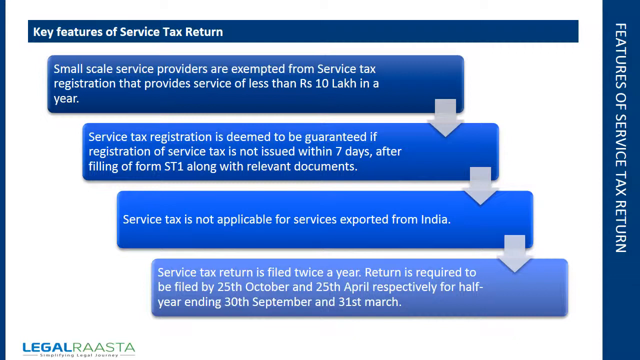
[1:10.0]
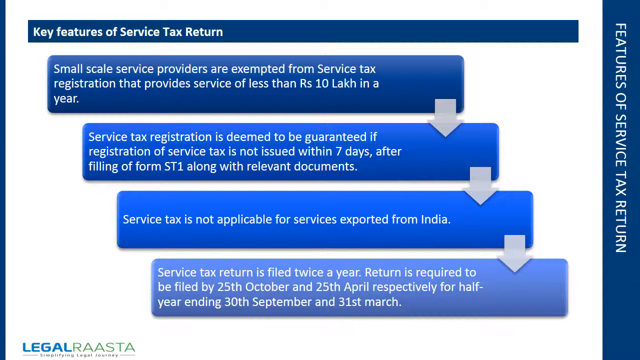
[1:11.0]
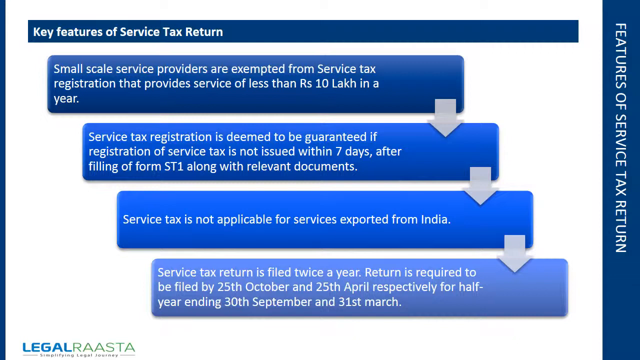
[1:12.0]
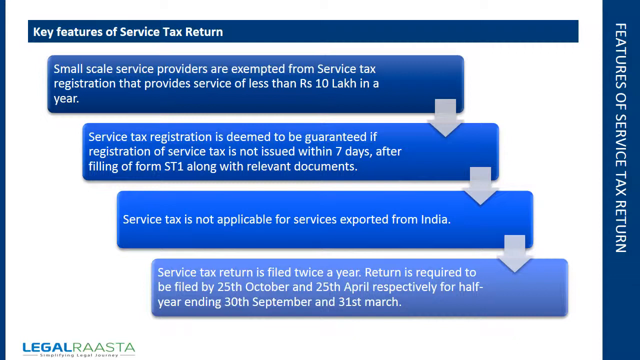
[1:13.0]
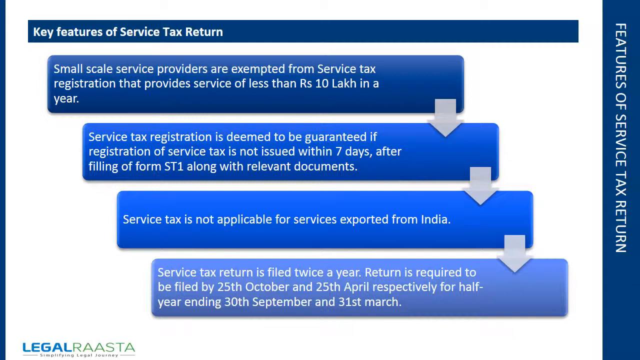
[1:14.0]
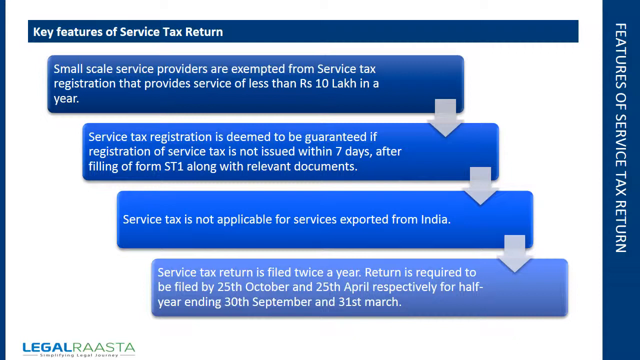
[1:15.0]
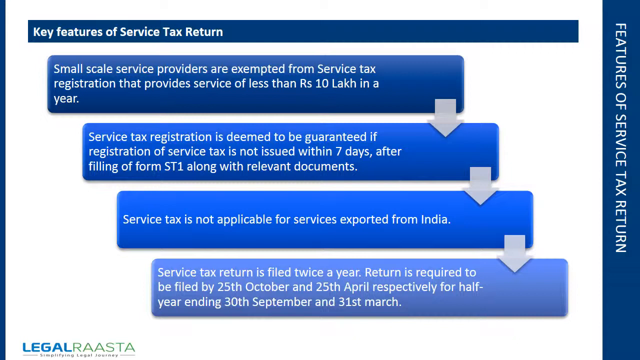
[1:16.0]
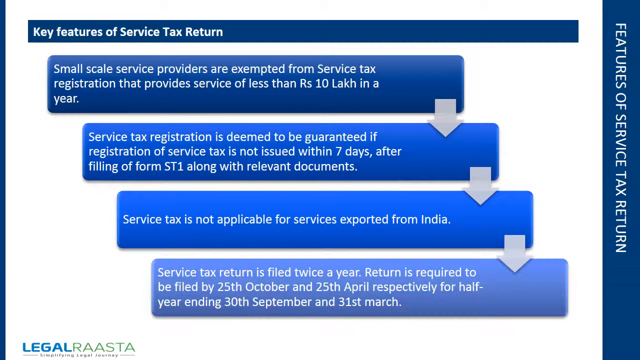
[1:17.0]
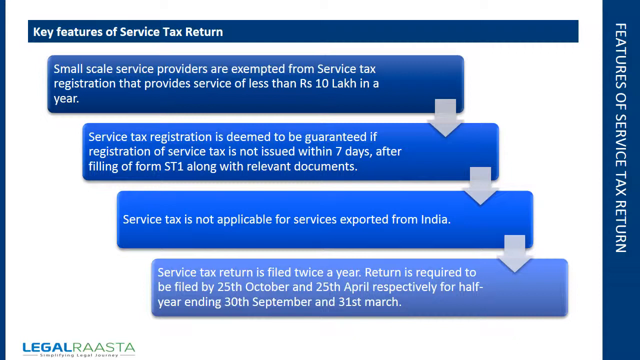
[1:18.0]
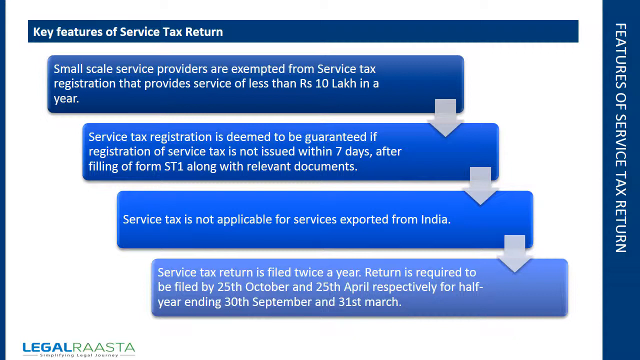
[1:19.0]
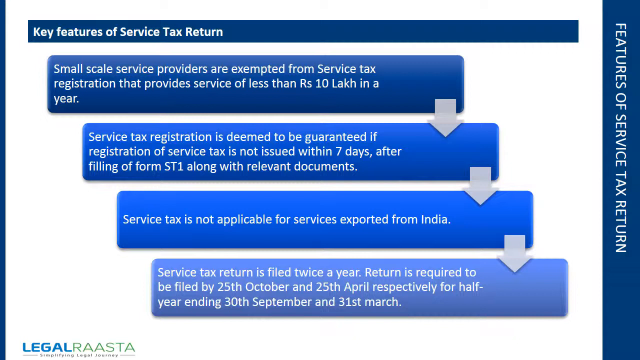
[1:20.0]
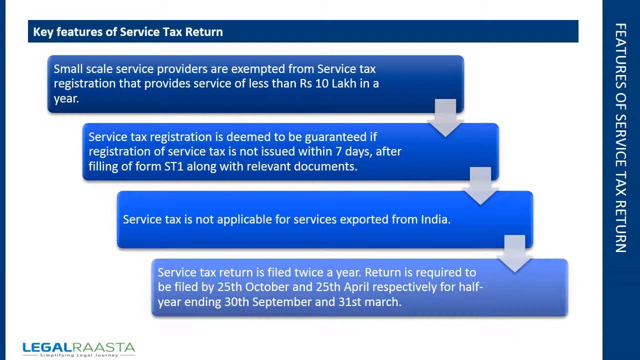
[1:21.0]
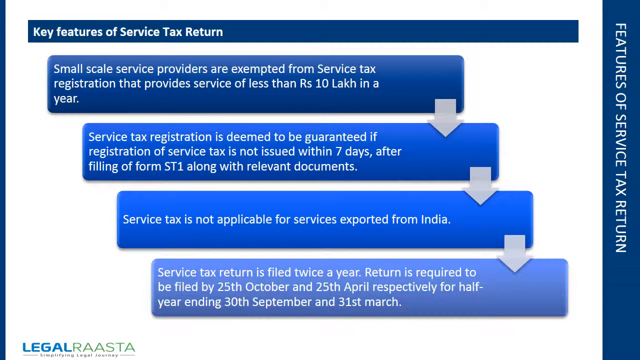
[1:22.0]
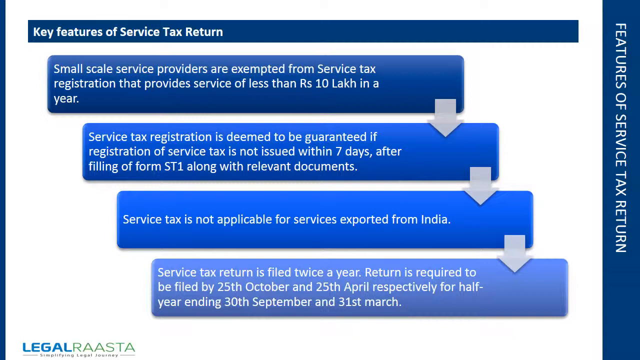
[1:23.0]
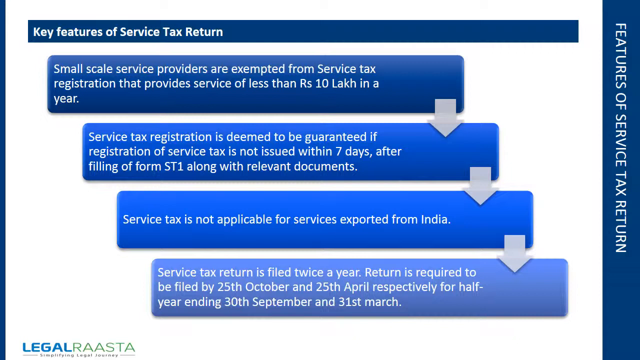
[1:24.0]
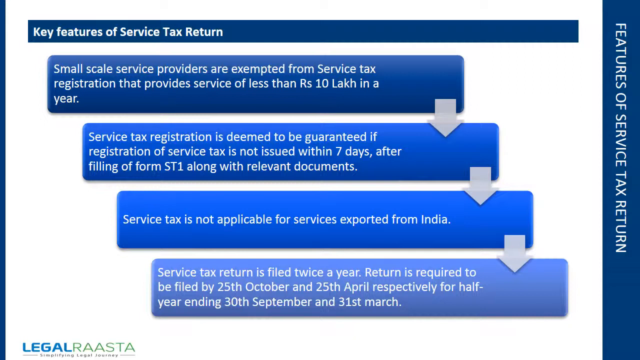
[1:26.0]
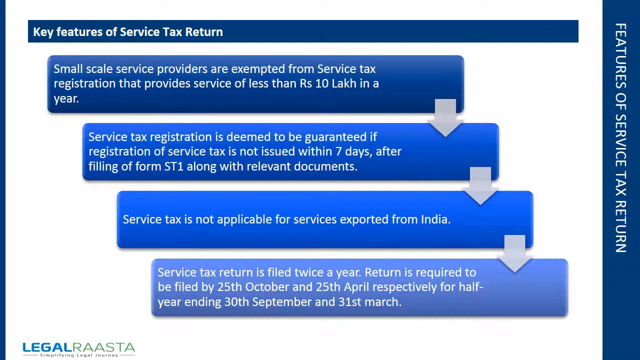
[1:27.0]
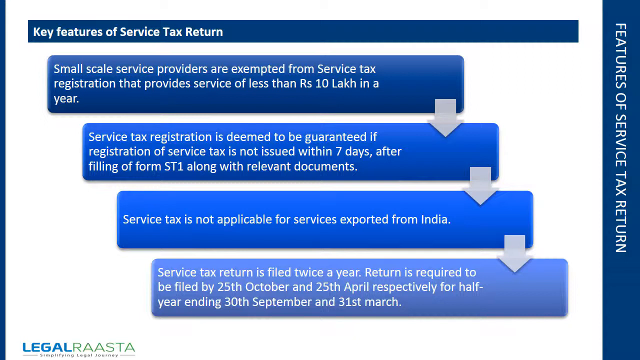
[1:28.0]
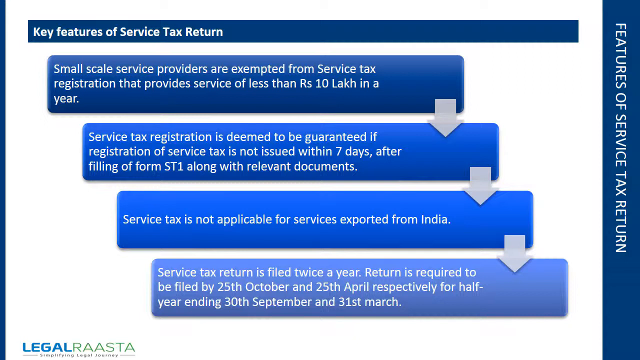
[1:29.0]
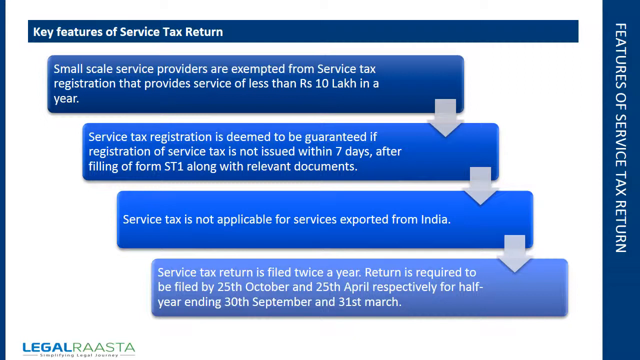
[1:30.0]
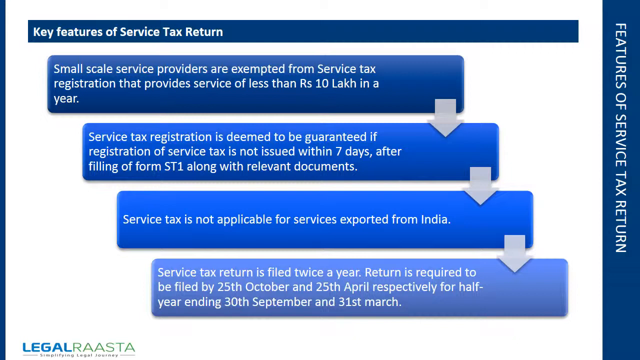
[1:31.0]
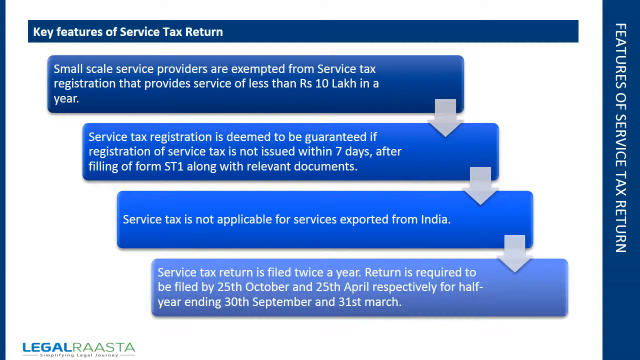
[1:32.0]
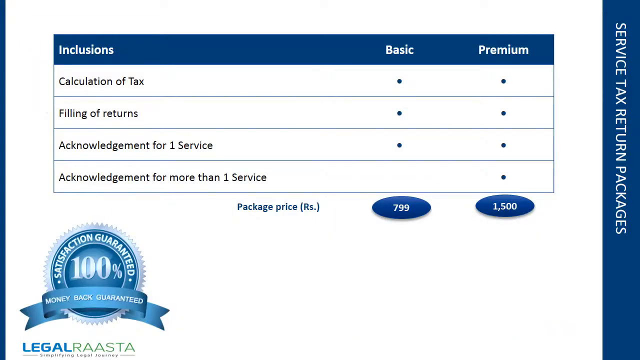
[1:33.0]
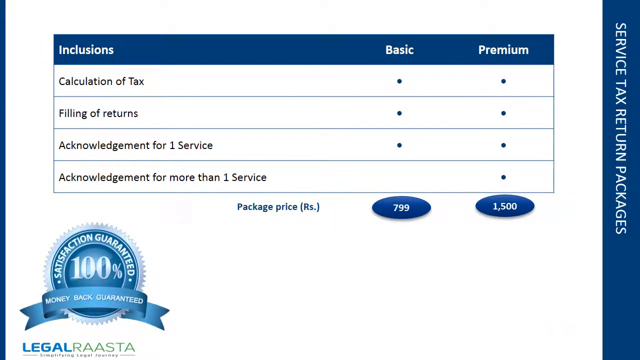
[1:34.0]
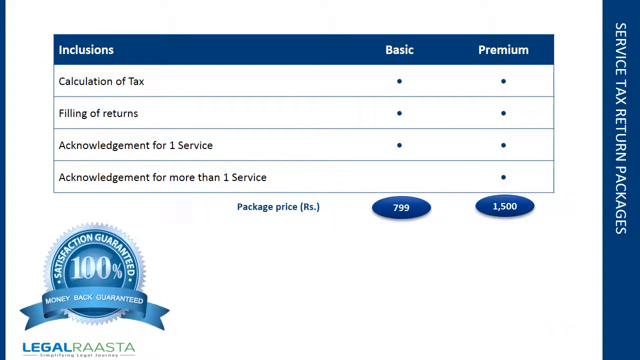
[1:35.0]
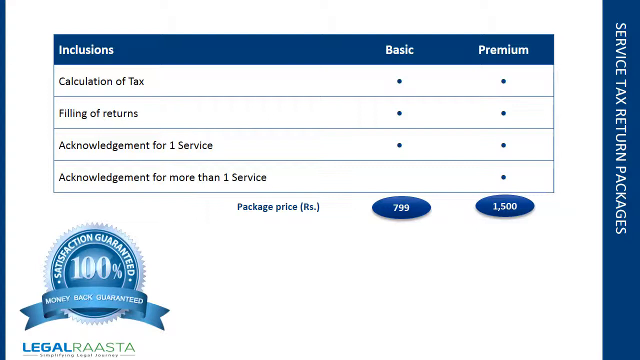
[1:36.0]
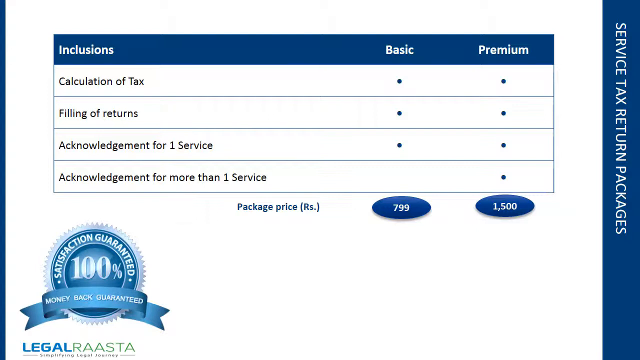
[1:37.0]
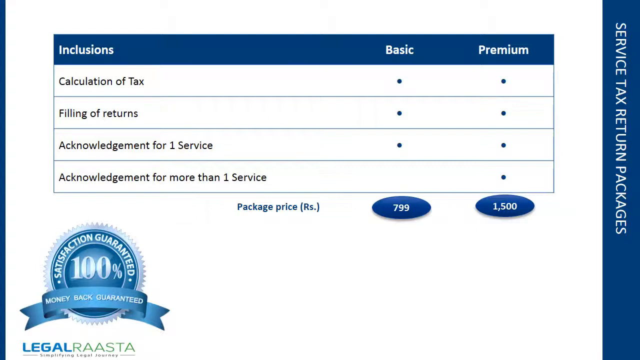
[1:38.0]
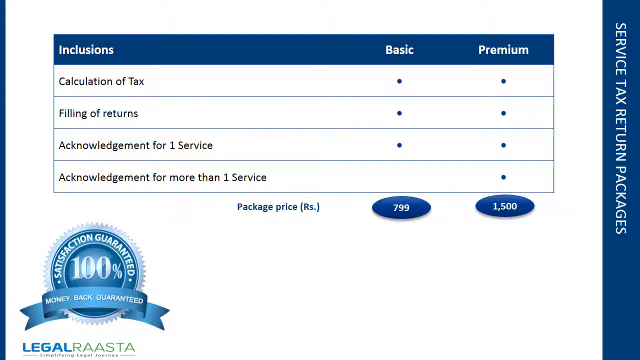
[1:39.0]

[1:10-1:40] A slide with a white background has a vertical dark blue block in the right margin with white letters, written sideways, reading "Features of Service Tax Return." A dark blue header block runs across the top, with white text on the left reading "Key Features of Service Tax Return." Beneath it is a long dark blue rectangular box with small white letters reading "Small-scale service providers are exempted from service tax registration that provides service of less than R.S. 10 lakh in a year." A light gray arrow at the bottom right of this box points down to another rectangular box in a slightly lighter shade of blue, shifted to the right so it is not directly under the first, reading "Service tax registration is deemed to be guaranteed if registration of service tax is not issued within seven days. After filing a Form ST 1, along with relevant documents." A gray arrow at its bottom right corner points down to another, slightly lighter blue box, shifted to the right, reading "Service tax is not applicable for services exported from India." A gray arrow at its bottom right corner points down to another lighter blue box, shifted to the right, with white text reading "Service tax return is filed twice a year. Return is required to be filed by 25th October and 25th April, respectively, for half year ending 30th September and 31st March." The next slide has a white background and a dark blue rectangular block in the right margin with white letters reading "service tax return packages." It shows a chart with a dark blue heading box labeled "inclusions" at the far left and "basic" and "premium" at the far right. Below are four rows with a white background. The first reads "calculation of tax," with a small circle in both the basic and premium columns. The second reads "filing of returns," with a small circle under basic and premium. The third reads "acknowledgment for 1 service," with a circle under basic and premium. The last reads "acknowledgment for more than one service," with a circle only under premium. Beneath the chart, in the middle, small dark blue text reads "package price" with "(RS.)" in parentheses, and to the right are dark blue ovals, one under basic with "799" in white and one under premium with "1,500." At the bottom left of the page is a certification, a circle of sorts reading "satisfaction guaranteed 100%" with a ribbon of sorts across its bottom reading "money back guaranteed." Beneath it in the bottom left corner is the logo of the company Legal Raasta.